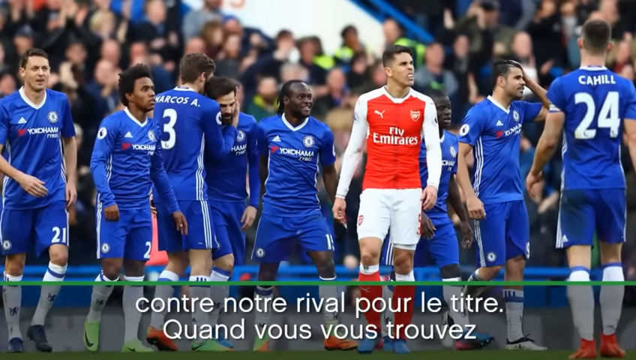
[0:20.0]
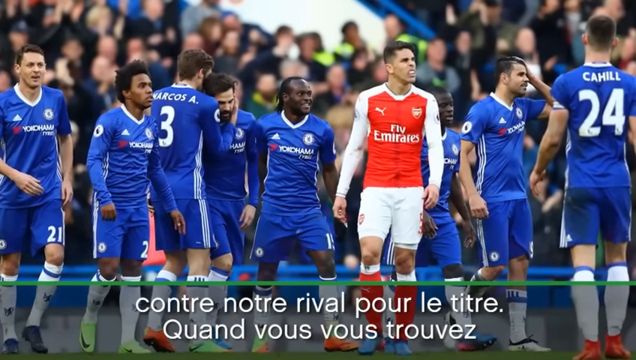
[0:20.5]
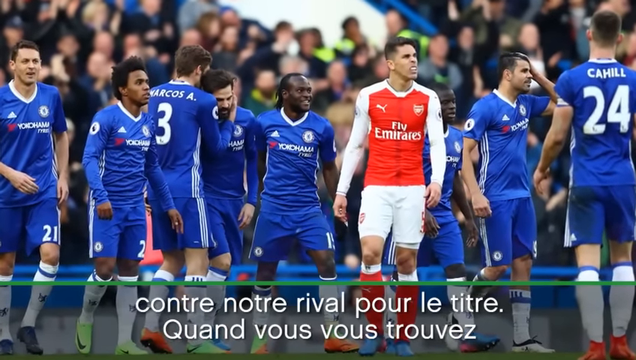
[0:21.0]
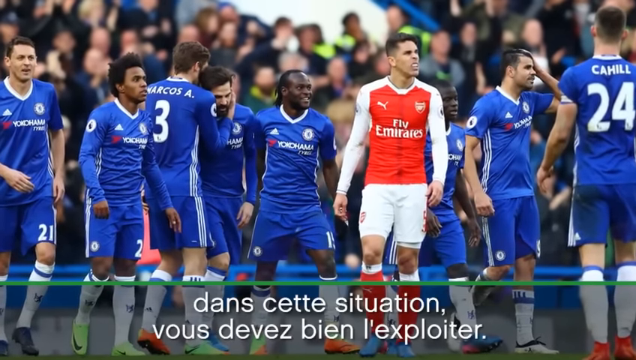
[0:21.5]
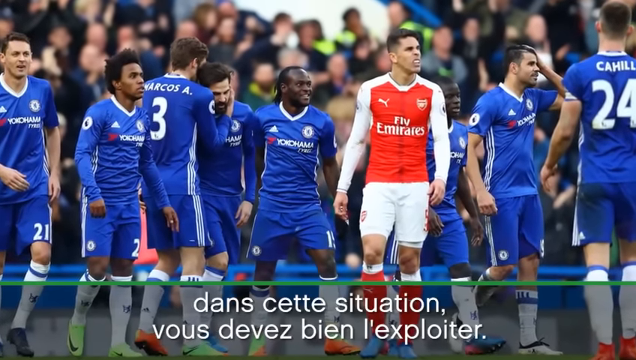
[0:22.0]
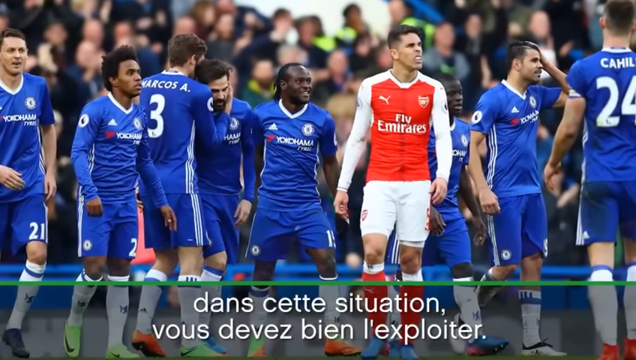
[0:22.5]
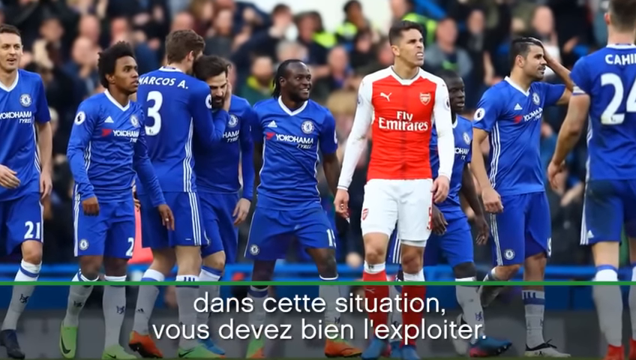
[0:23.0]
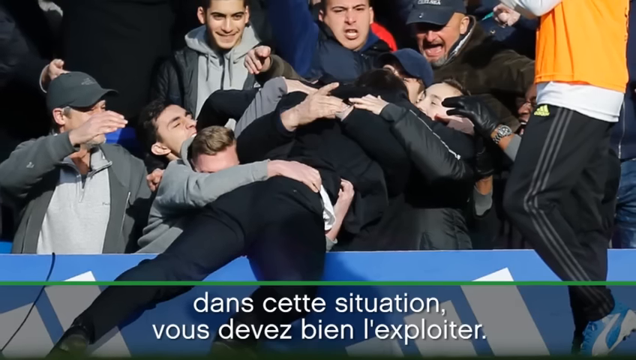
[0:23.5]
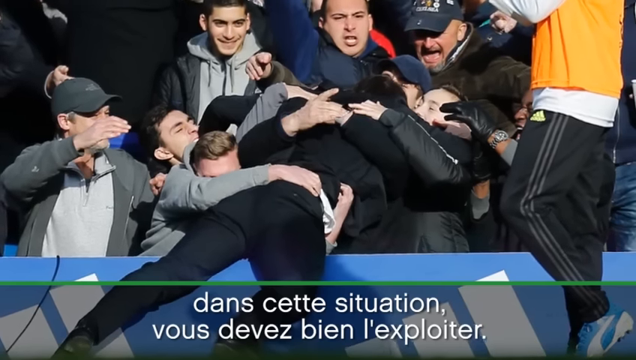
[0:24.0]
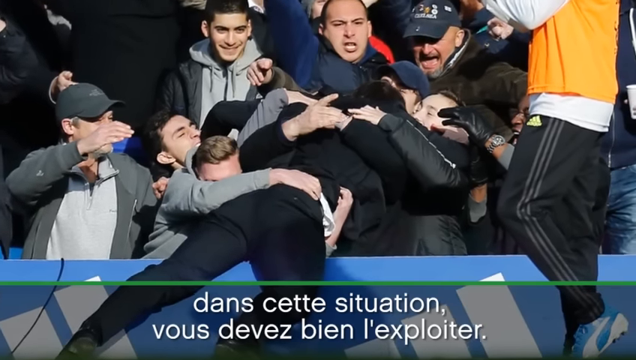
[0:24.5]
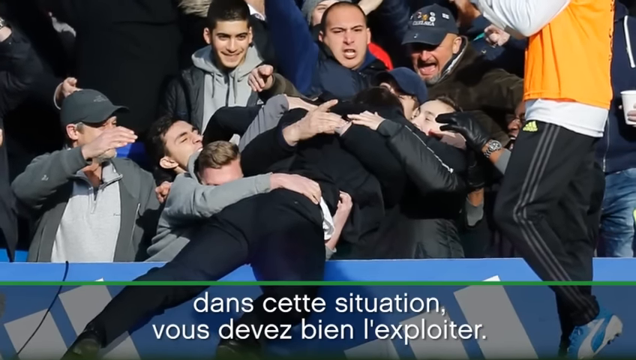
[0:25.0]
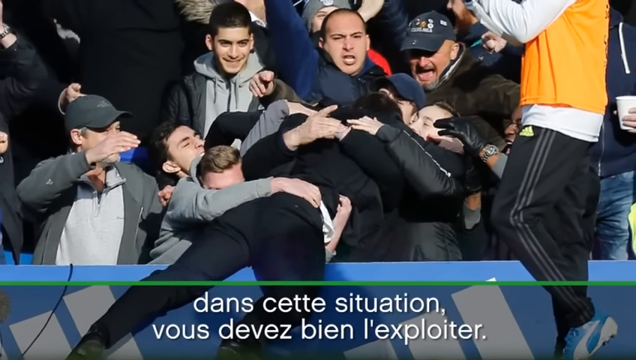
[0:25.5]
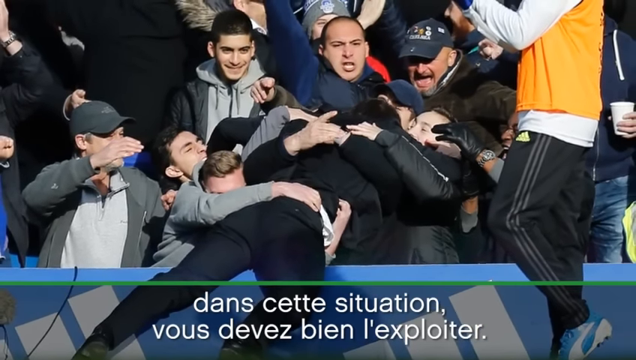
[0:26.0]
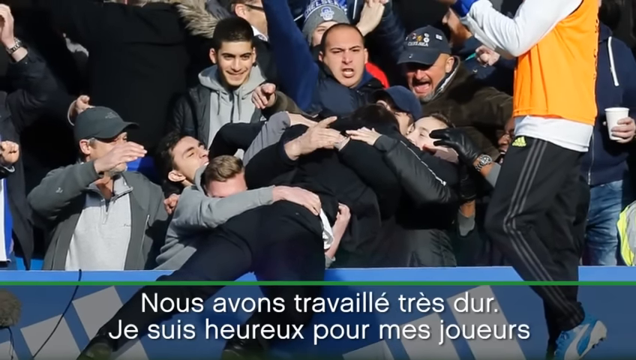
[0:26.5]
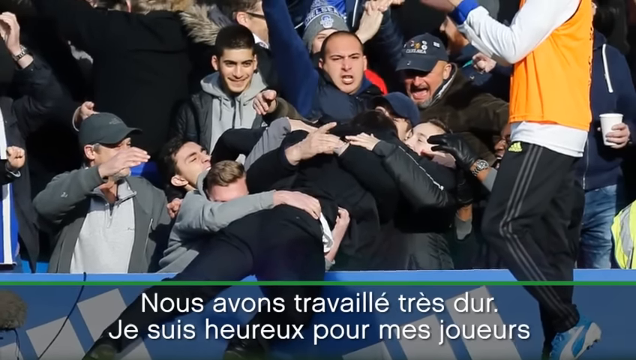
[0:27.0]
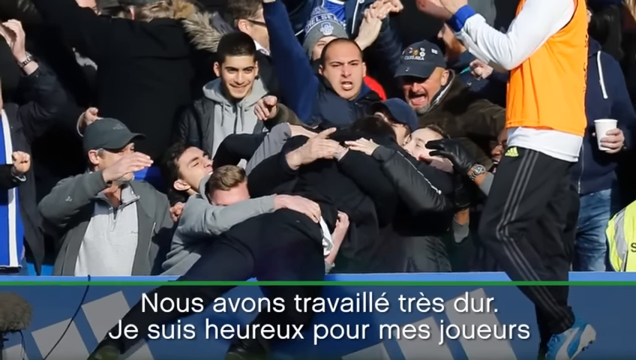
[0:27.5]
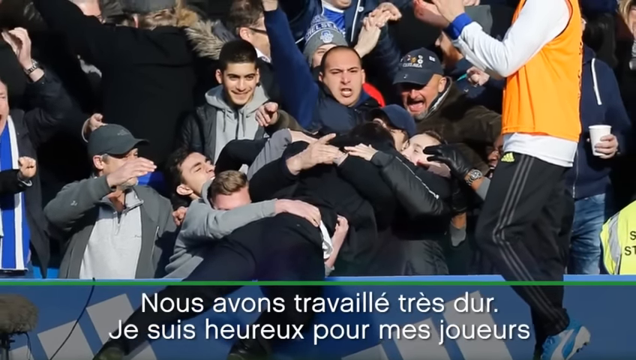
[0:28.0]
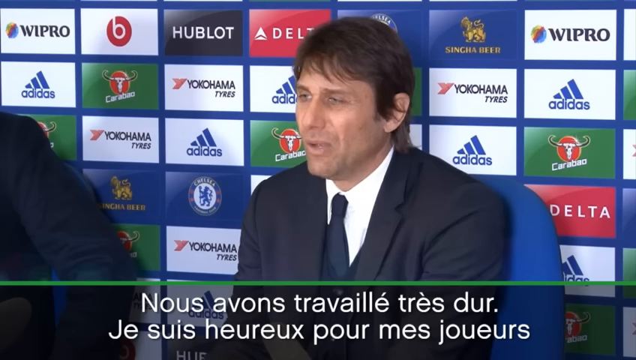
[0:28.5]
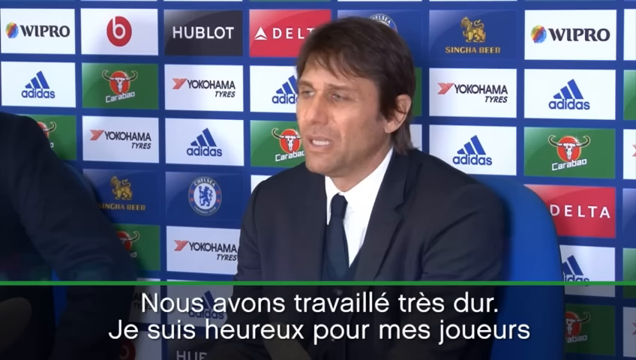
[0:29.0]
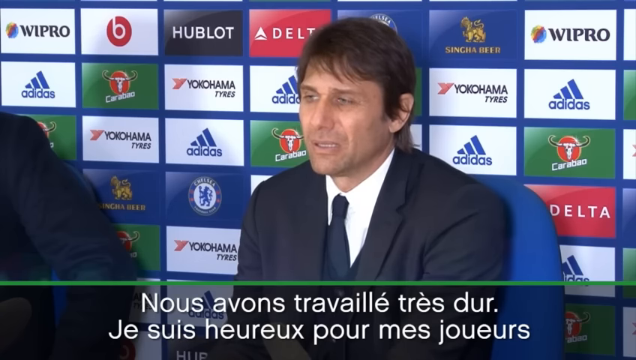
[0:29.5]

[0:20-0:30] The scene changes to an image of a team in blue and white uniforms all standing together, with one man in a different, red and white uniform standing in the middle of the blue-uniformed team. Behind them is a bleacher full of people, probably at least a hundred. The image then changes to a crowd of people in what appears to be the stands, with someone leaning over the stands into the crowd. People from the crowd are hugging the man and pulling him over. A person in a yellow and white shirt and black pants is standing next to the person leaning over into the stands. The wall around the stand is blue and appears to have the Adidas logo on it.